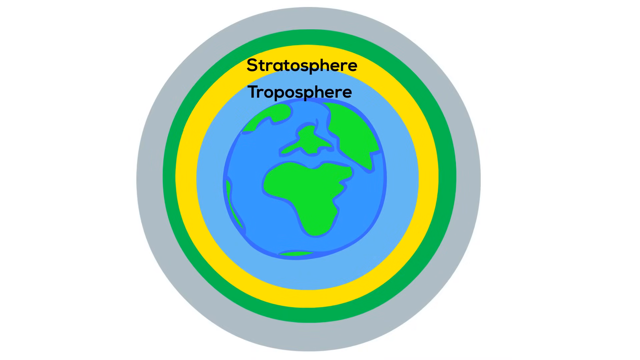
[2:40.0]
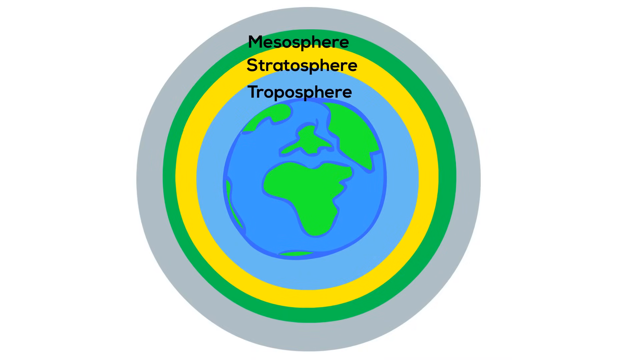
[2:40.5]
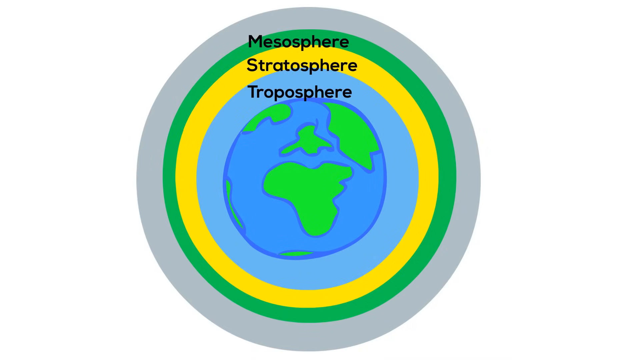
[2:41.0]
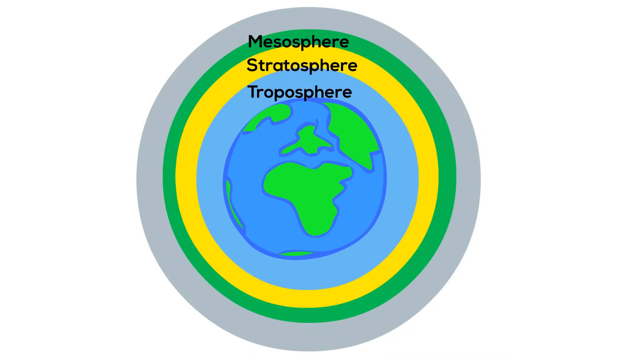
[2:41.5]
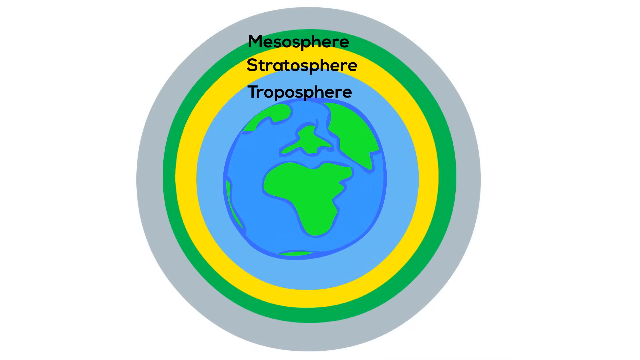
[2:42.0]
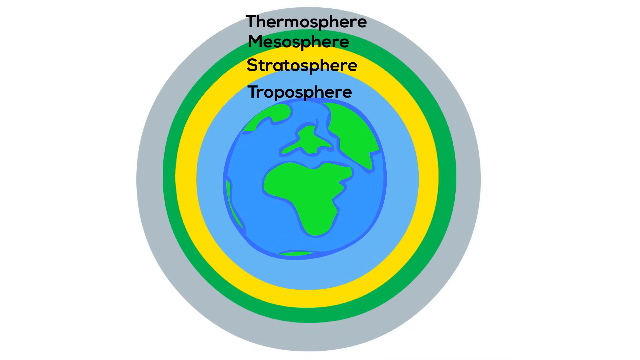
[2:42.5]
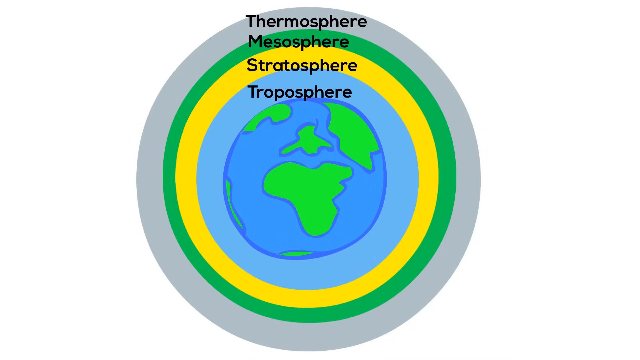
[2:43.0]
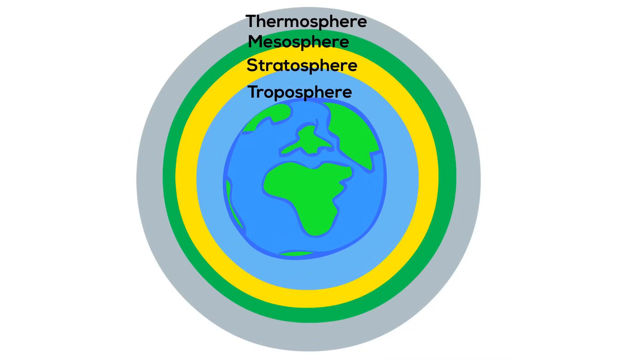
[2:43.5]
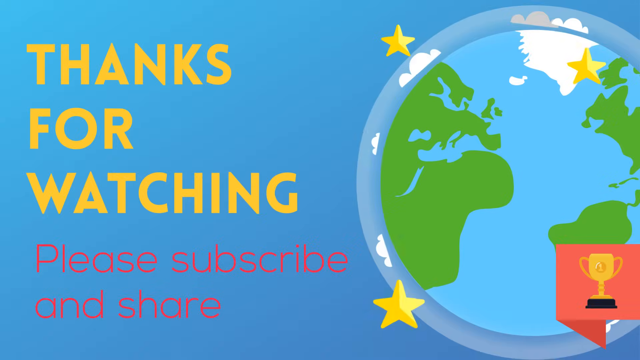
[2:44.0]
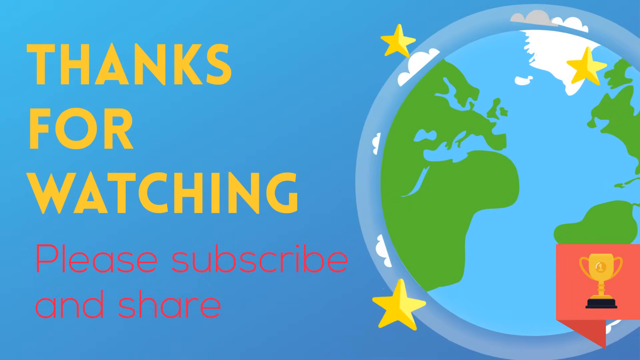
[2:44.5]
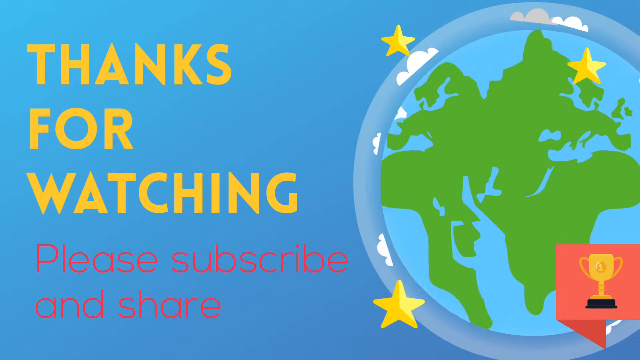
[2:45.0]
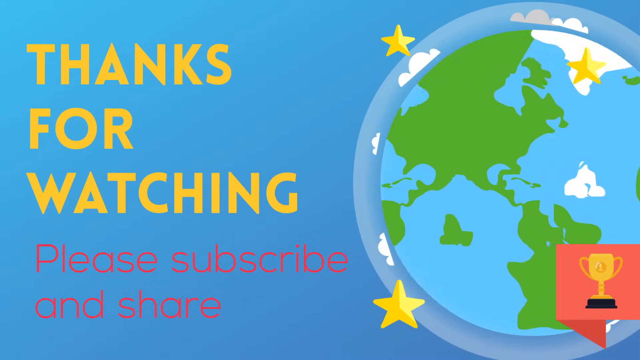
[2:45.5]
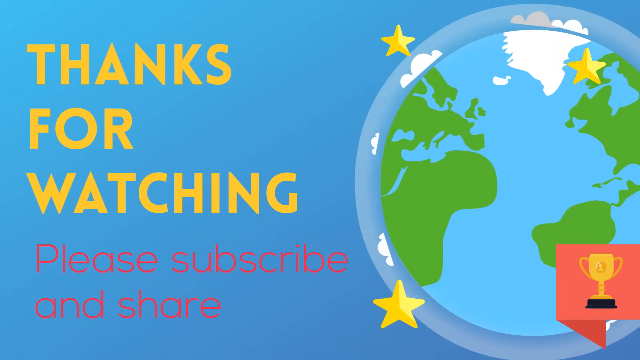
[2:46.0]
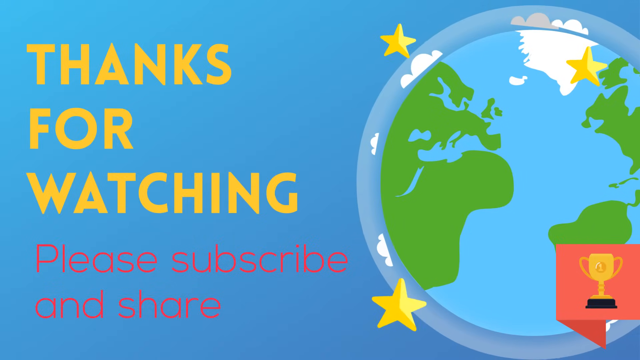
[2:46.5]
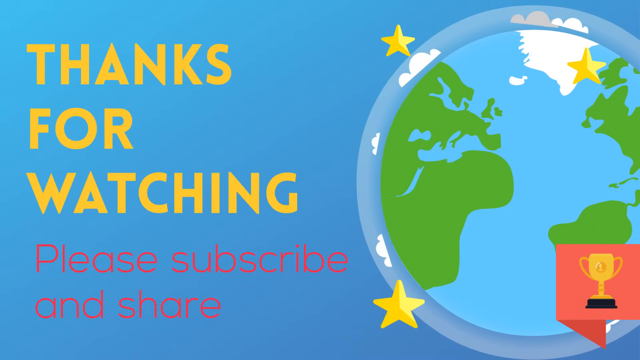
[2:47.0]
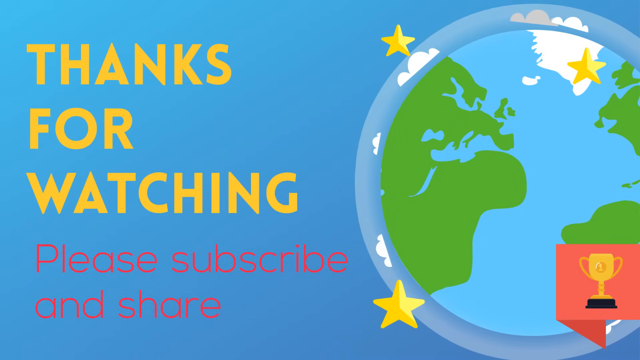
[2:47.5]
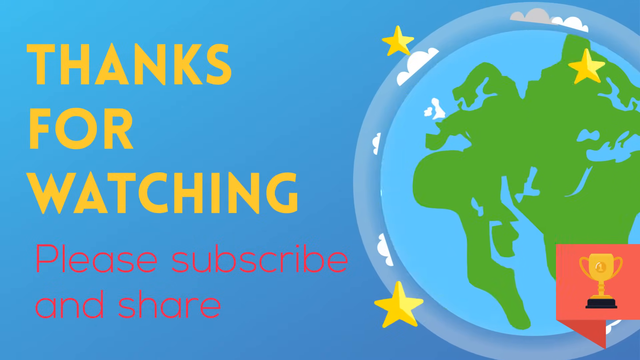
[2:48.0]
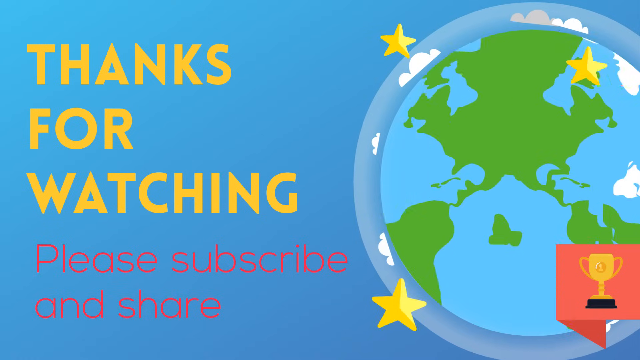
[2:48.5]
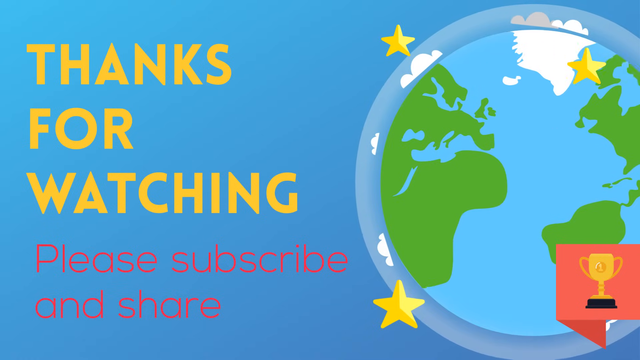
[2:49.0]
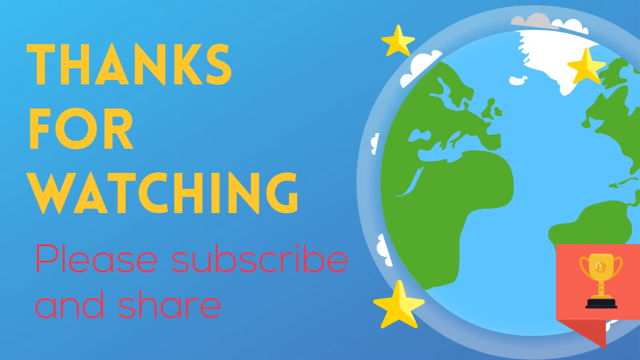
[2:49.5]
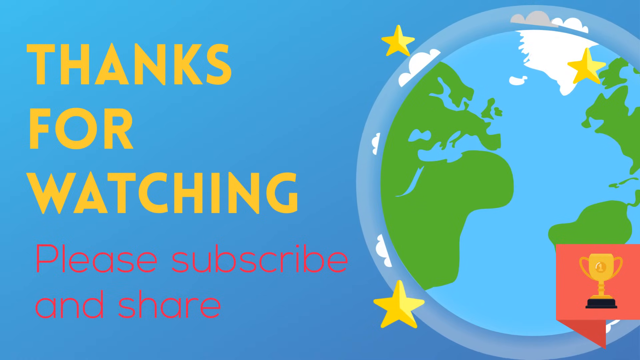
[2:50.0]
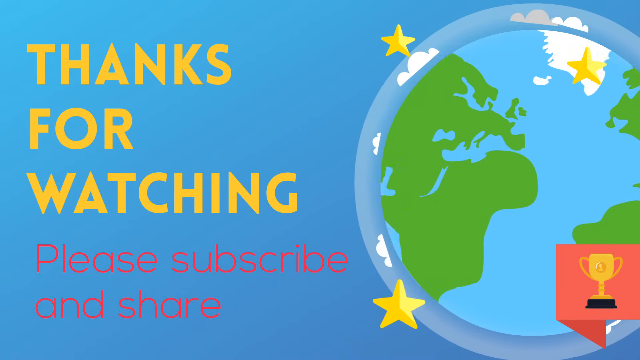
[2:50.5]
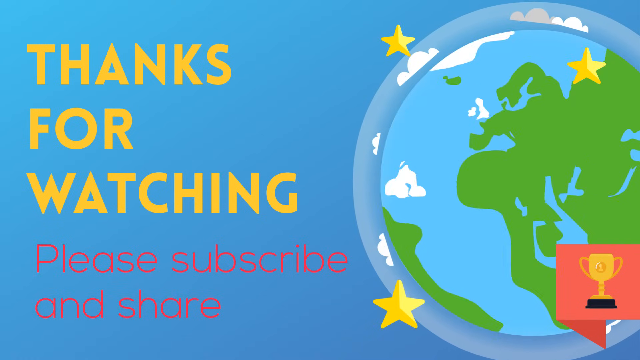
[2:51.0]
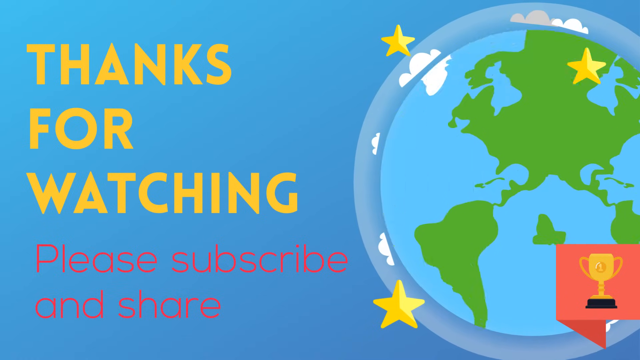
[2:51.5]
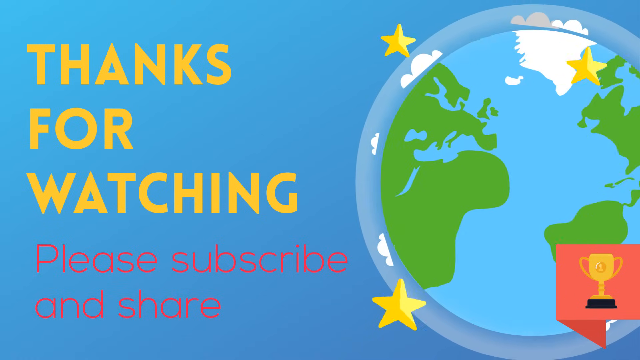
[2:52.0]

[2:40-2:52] The layer diagram from the beginning appears, showing the troposphere, stratosphere, mesosphere, and thermosphere. An end screen then reads "thanks for watching" in yellow text, with "please subscribe and share" in slightly smaller red text at the bottom. An animated globe goes around in a clockwise circle with yellow stars scattered around it, and apparently a sphere surrounds the Earth.